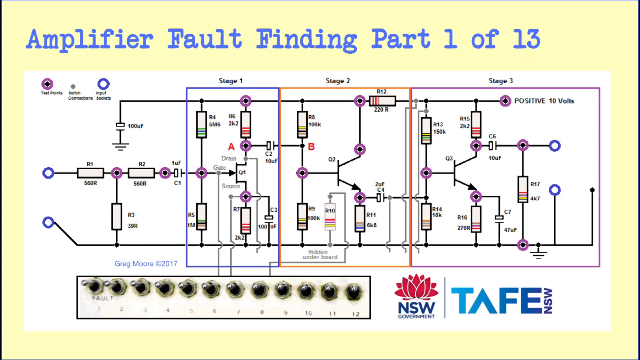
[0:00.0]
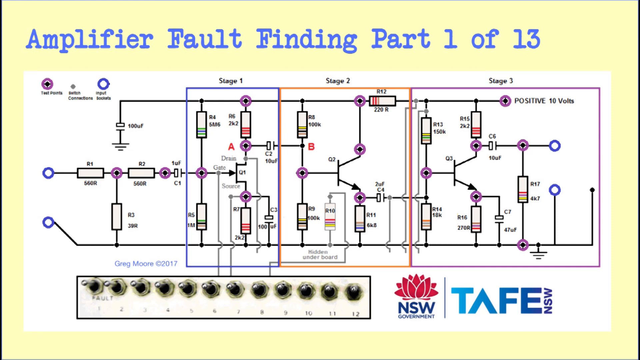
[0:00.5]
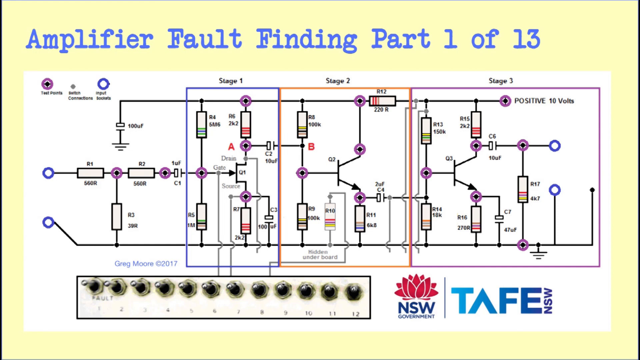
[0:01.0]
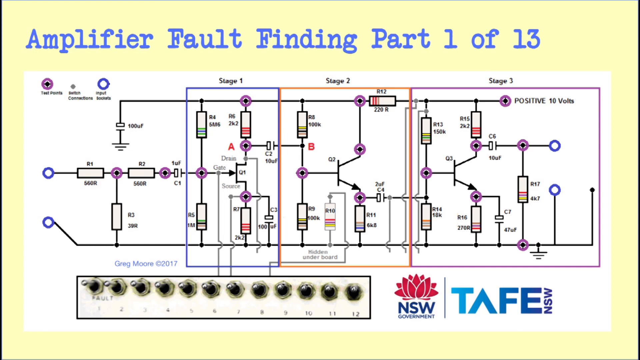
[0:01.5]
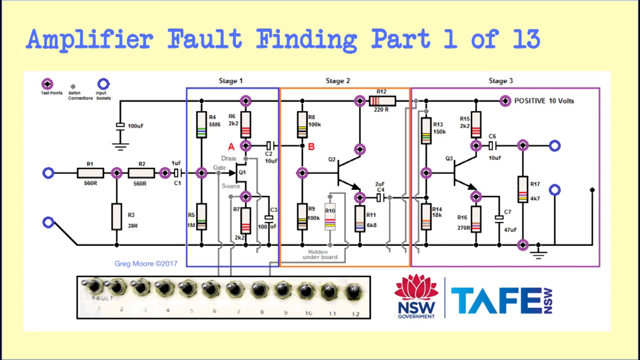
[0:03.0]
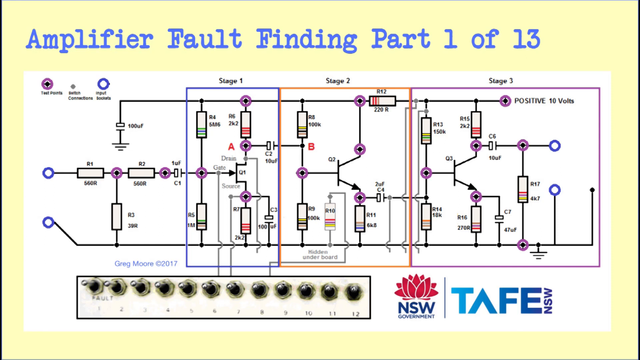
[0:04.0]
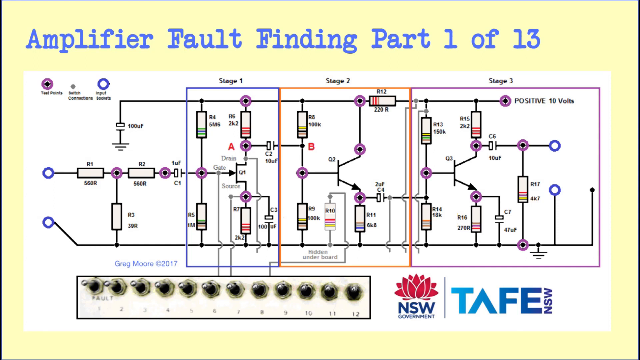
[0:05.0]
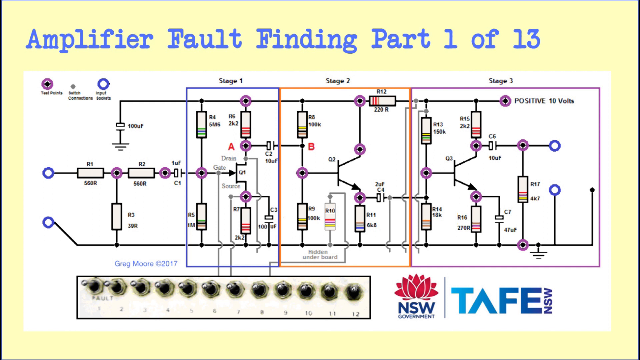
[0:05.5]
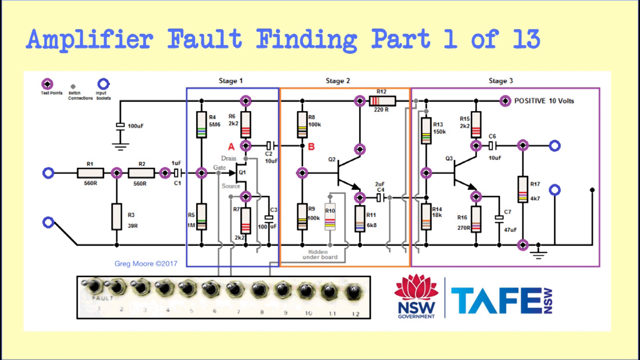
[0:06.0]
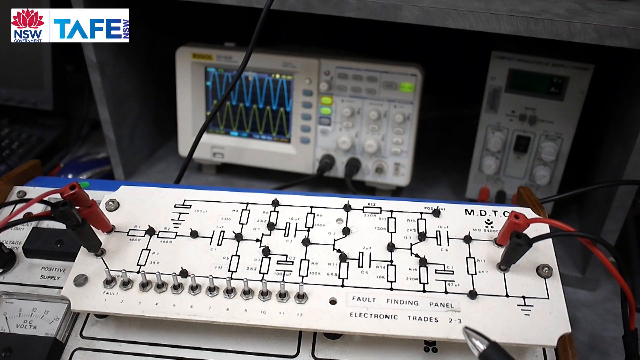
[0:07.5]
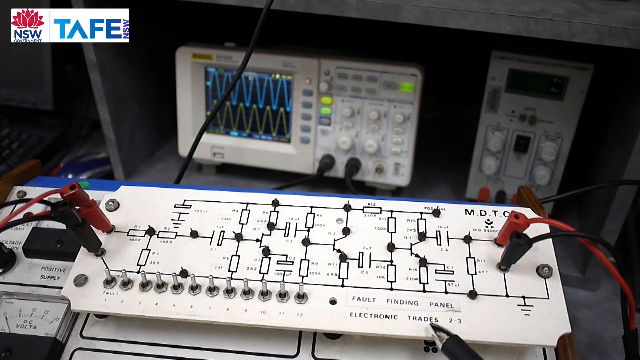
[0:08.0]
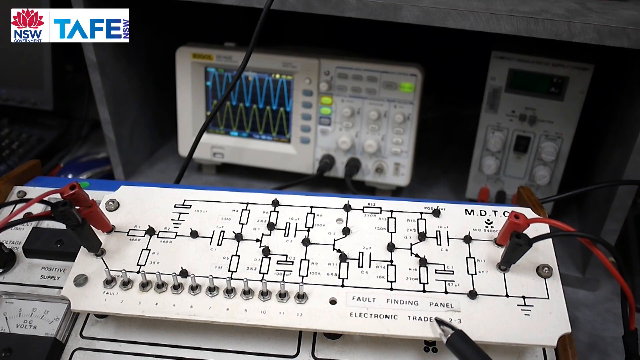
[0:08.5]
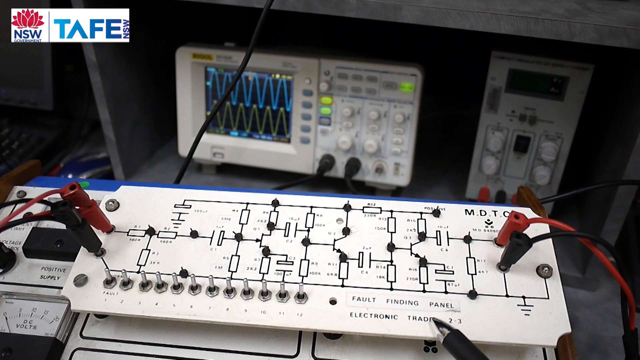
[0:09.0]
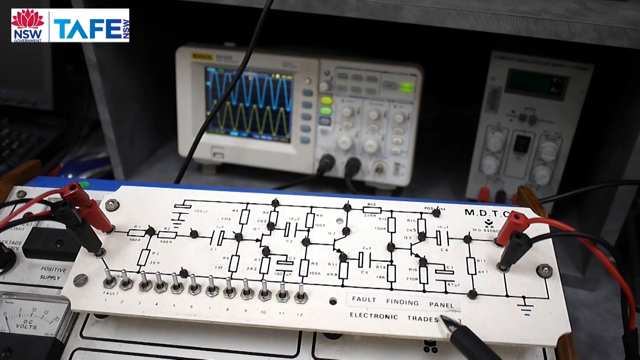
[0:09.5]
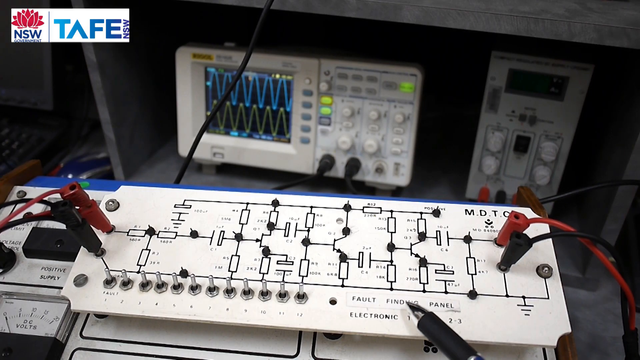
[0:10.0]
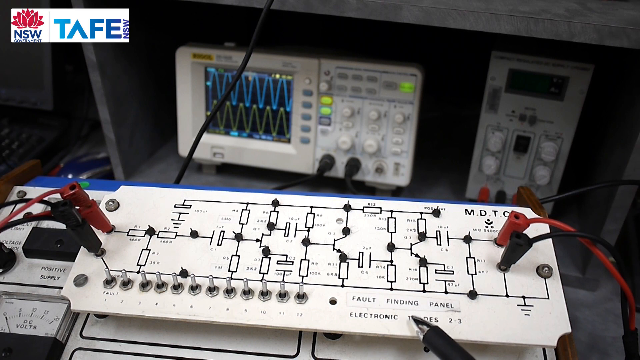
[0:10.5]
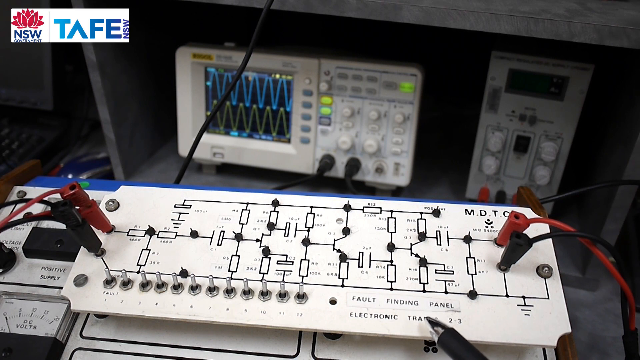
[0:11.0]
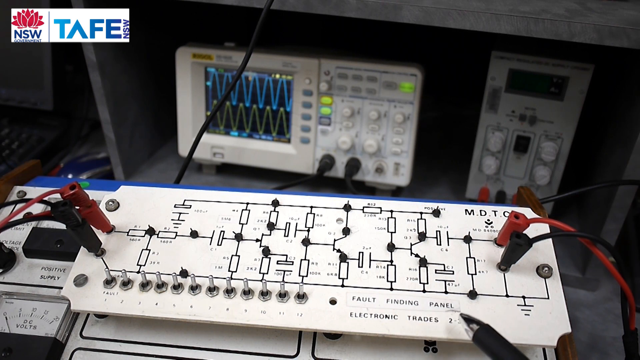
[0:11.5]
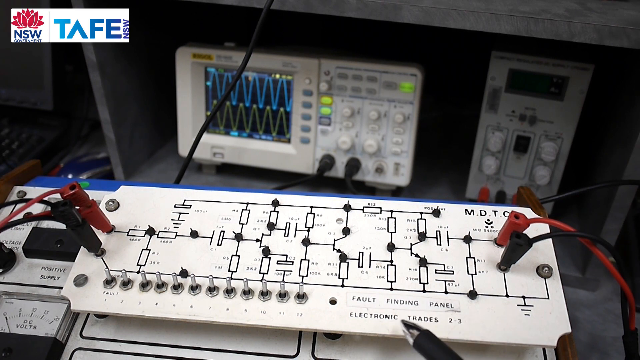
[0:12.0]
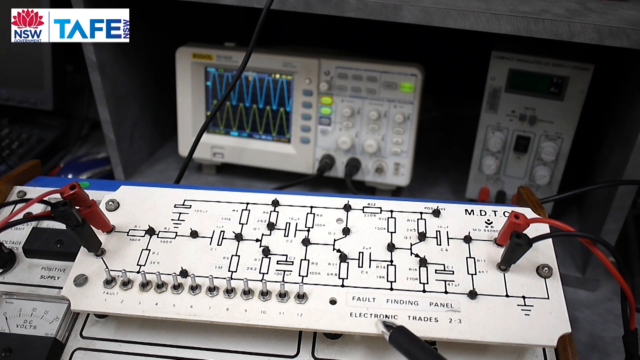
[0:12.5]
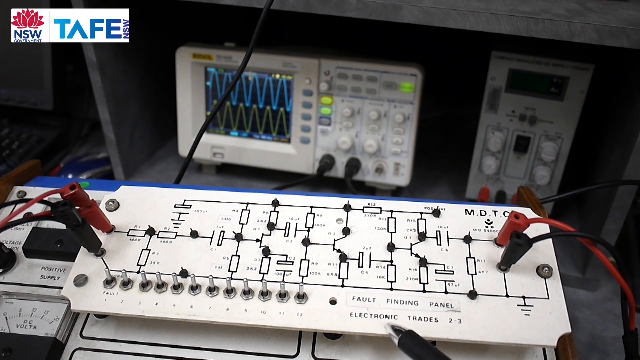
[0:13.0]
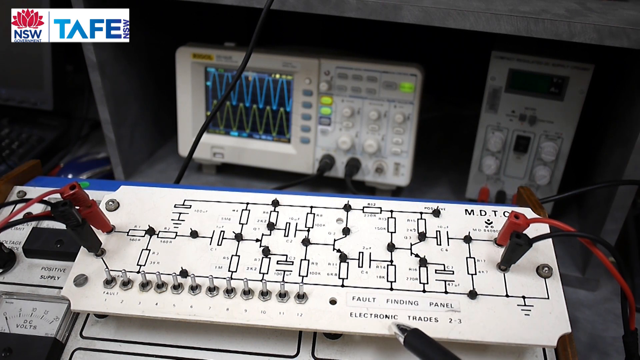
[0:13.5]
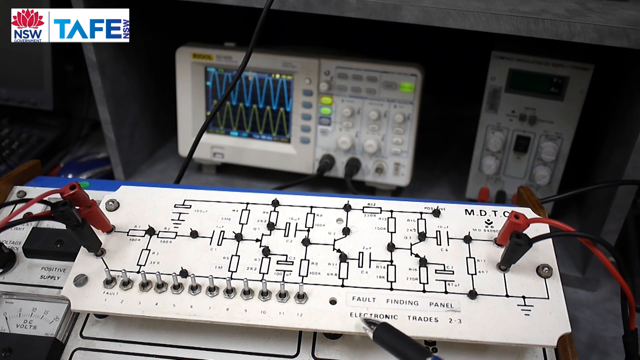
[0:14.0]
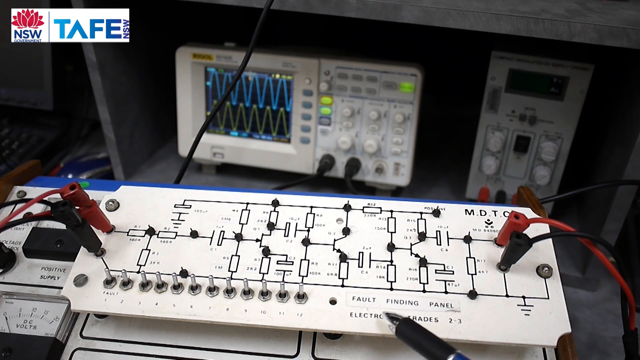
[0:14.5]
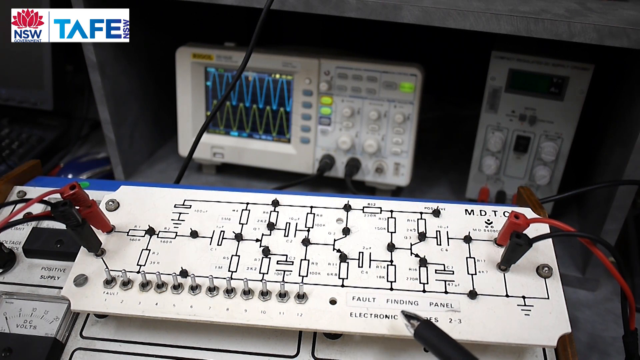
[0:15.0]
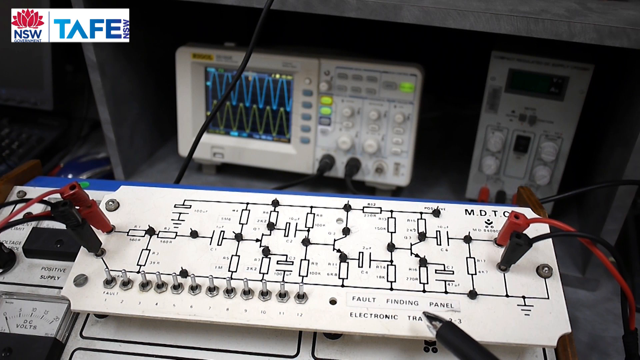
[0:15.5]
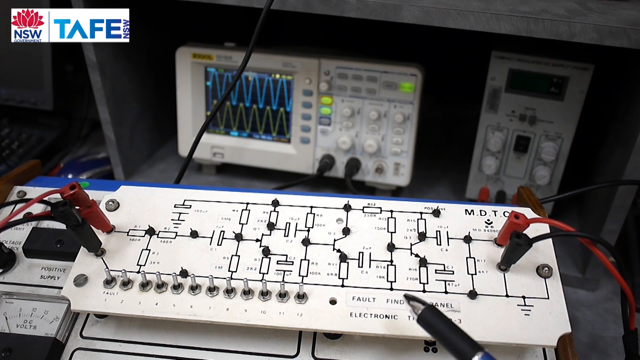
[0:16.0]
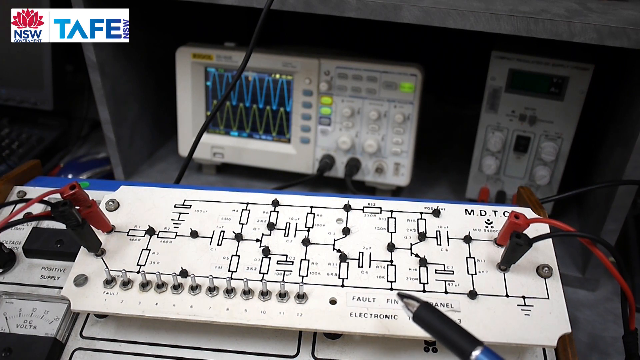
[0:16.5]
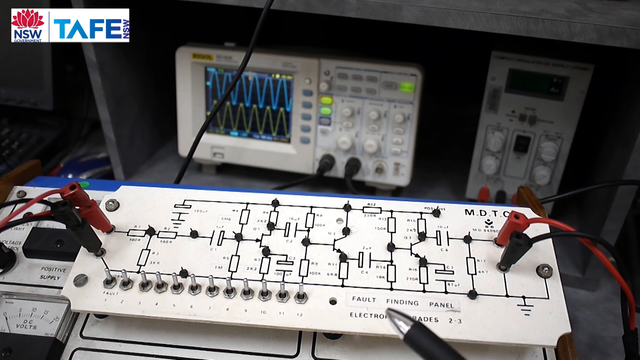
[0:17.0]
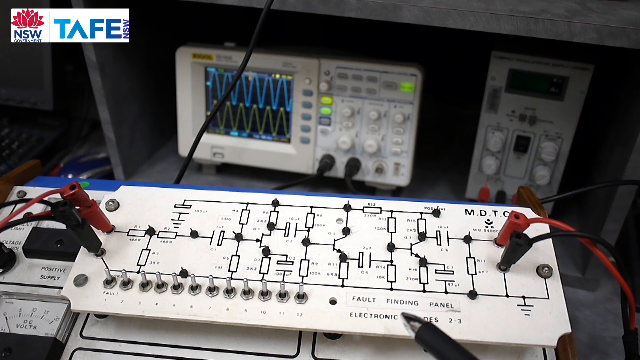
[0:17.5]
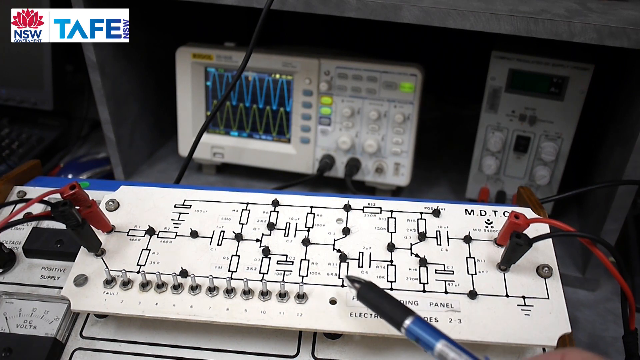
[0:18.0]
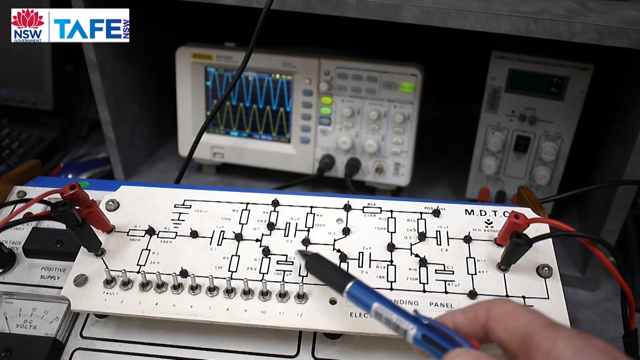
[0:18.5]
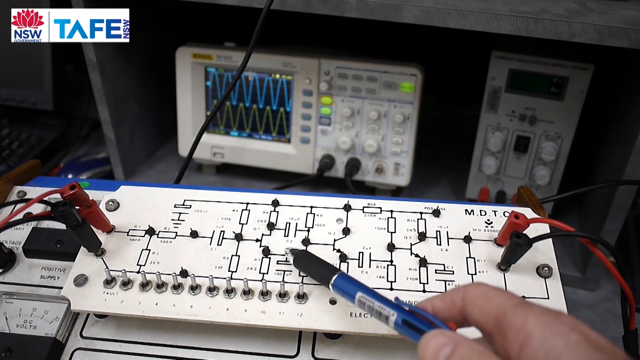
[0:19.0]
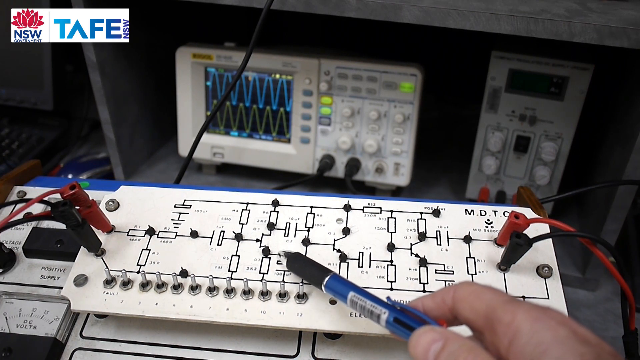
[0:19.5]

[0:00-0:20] The video opens on a yellow background screen with a title at the top in blue: "Amplifier fault finding part 1 of 13". In the center of the yellow area is a white rectangular box containing a diagram that is almost like a map or a design, a map of circuits and inputs, with little boxes containing different colored stripes, connected by arrows and black lines. At the bottom right of the screen is something that kind of looks like a red lotus flower with the letters N, S, W and a word printed below in a small font. Next to it is a straight vertical line, followed by blue lettering: a T, then what looks like an upside-down V, possibly an A without the crossbar, then an F and an E, and next to the E, running vertically, the letters N, S, W. This screen stays up for about five to six seconds. The video then changes to a real live scene showing a white piece of plastic, likely a machine of some sort, that sort of looks like the diagram from the first screen. Black and red wires are plugged in on its left and right.